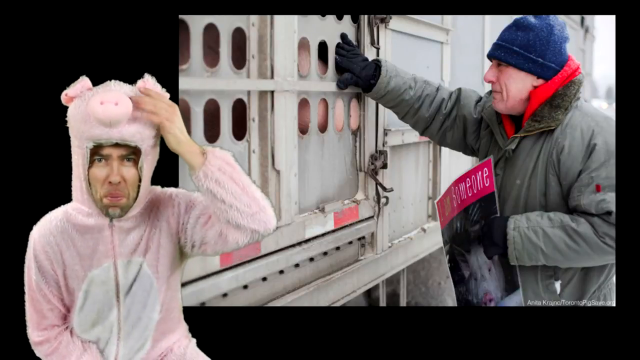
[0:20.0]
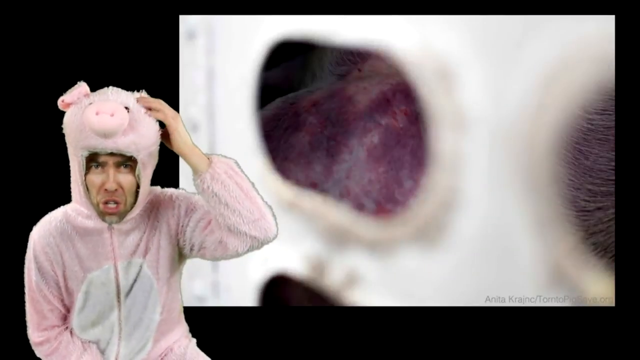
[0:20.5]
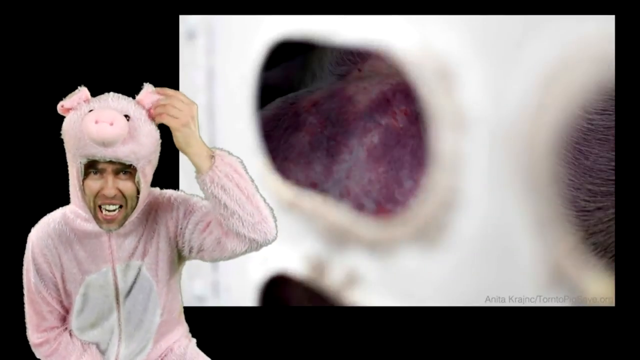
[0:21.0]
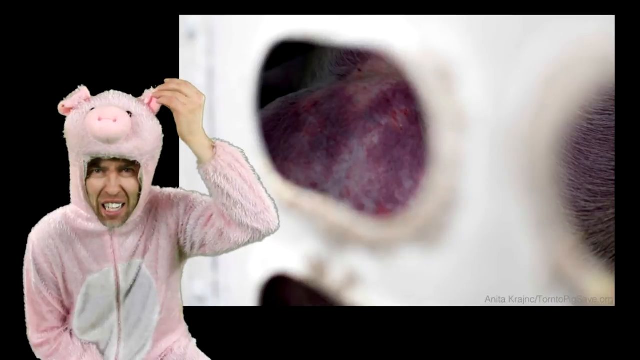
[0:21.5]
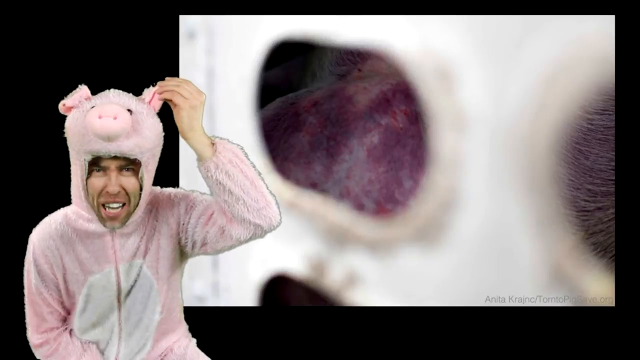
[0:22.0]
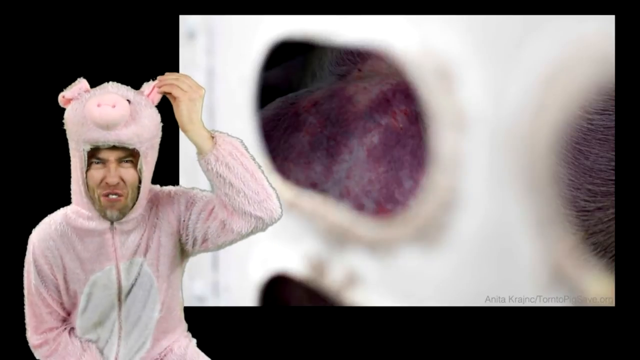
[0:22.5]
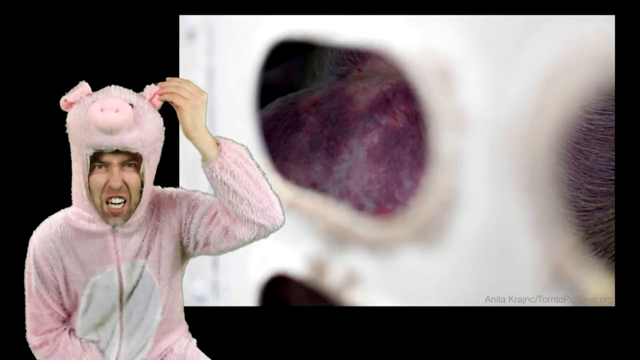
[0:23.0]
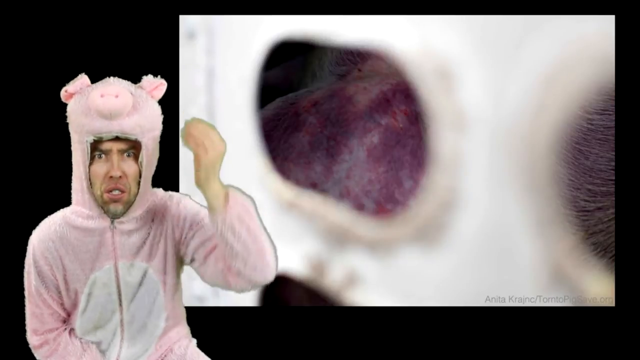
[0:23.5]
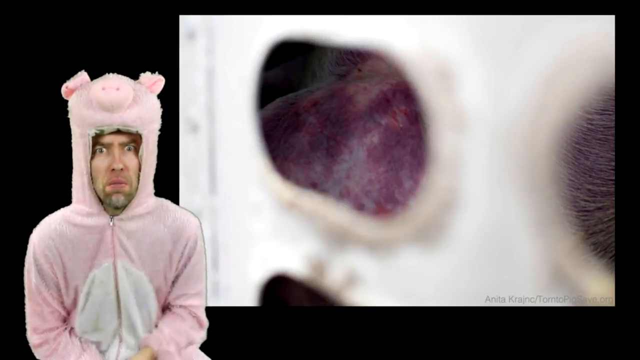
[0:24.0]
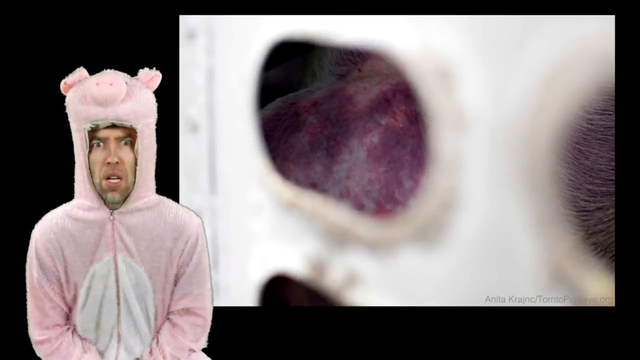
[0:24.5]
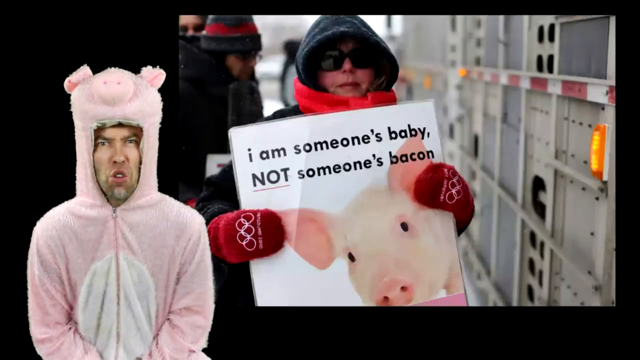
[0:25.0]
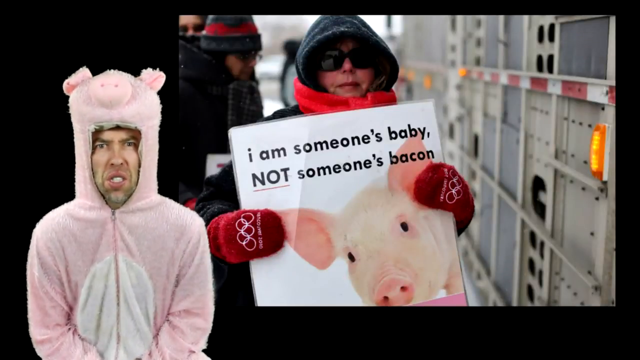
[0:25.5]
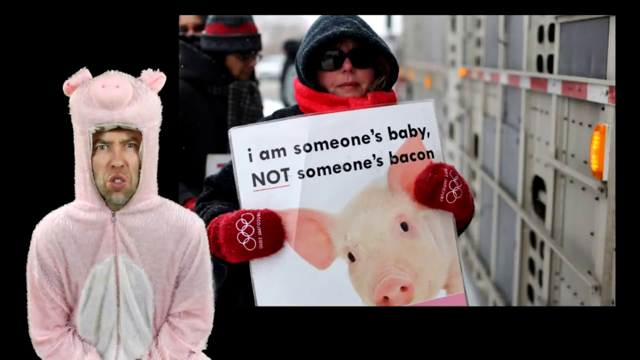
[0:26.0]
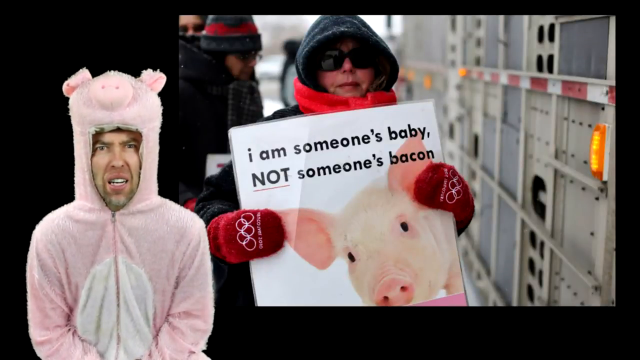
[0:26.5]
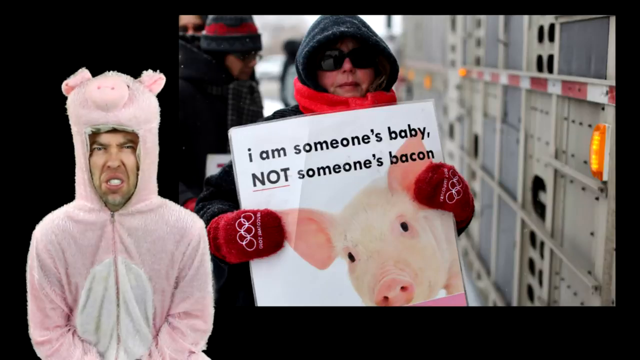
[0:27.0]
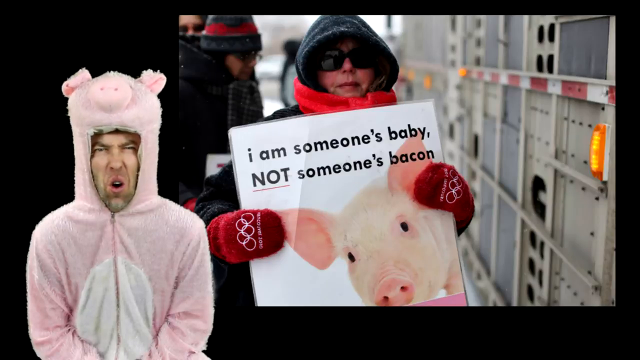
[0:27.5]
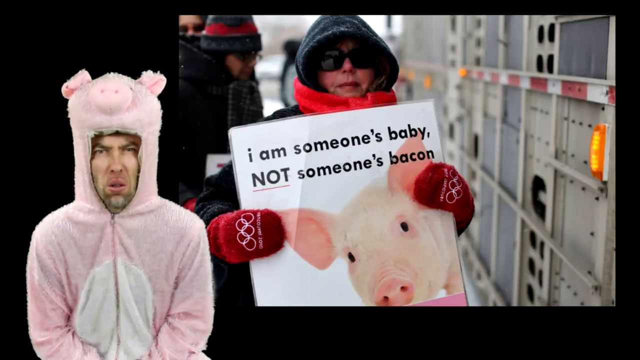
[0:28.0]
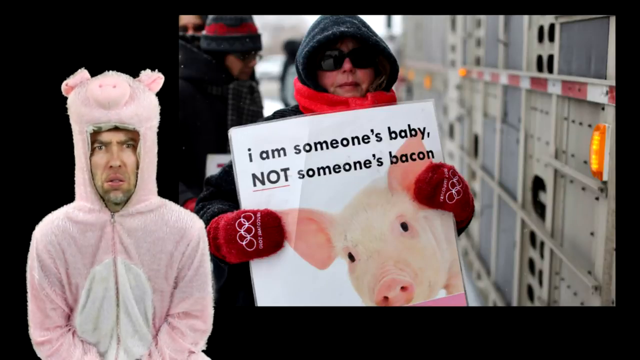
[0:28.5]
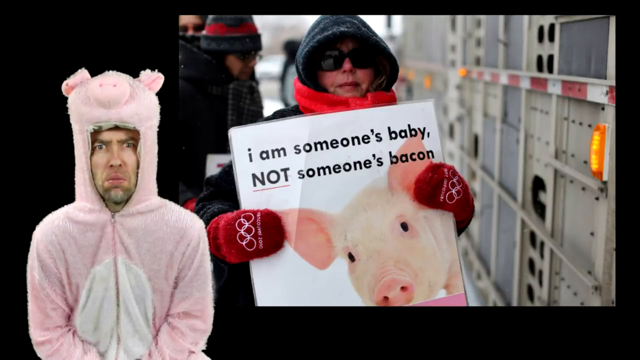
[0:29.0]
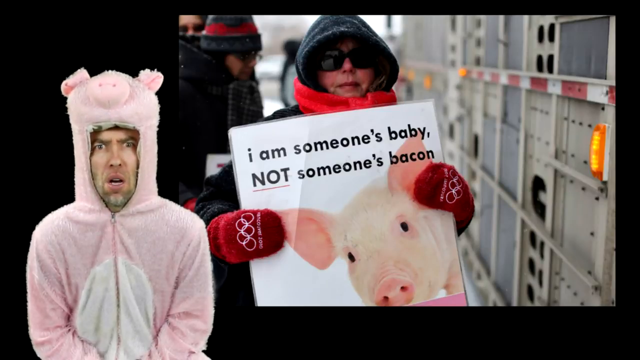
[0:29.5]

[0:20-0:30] The man in the pig costume holds the hairs of the pig. On the right-hand side, in a still picture, an old man grips his hand into the holes where the pigs' snouts are coming out. The man in the pig costume talks, and beside him appears another person in dark sunglasses, a red scarf around the neck, a hoodie, and a white glove with white circle patches on it, carrying a placard that reads "I'm someone's baby not someone's bacon" with a picture of a pig on it. They stand beside what looks like a truck. Then a man in a black glove, blue cap, red scarf around the neck and gray jacket holds another placard with a pig picture on it. It appears to be a protest about the protection of pigs.